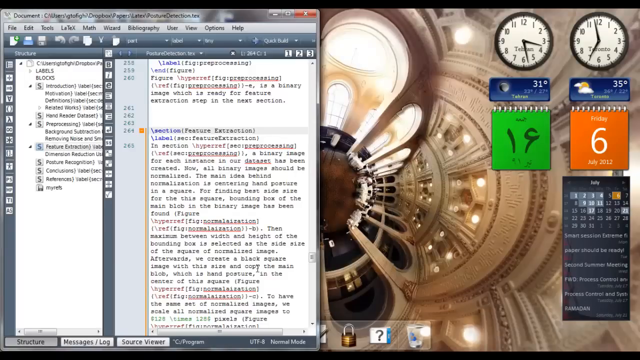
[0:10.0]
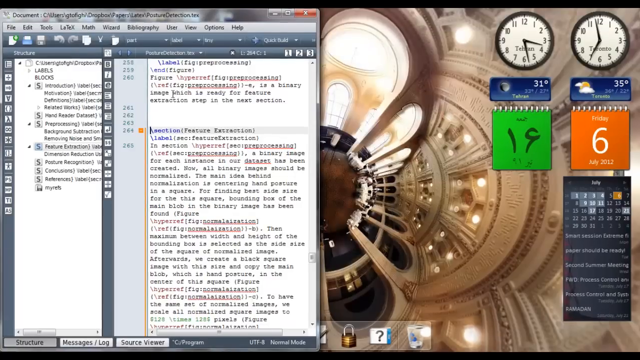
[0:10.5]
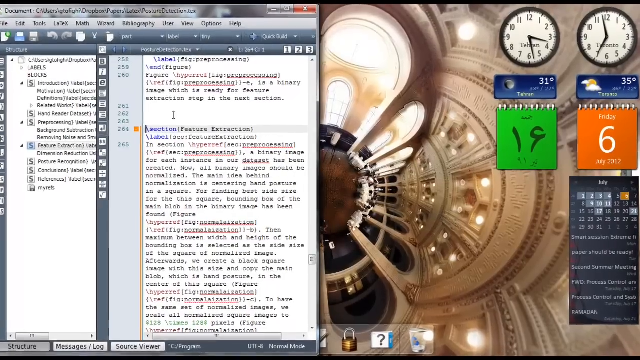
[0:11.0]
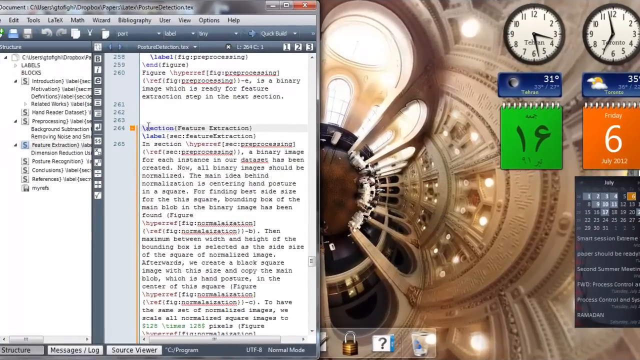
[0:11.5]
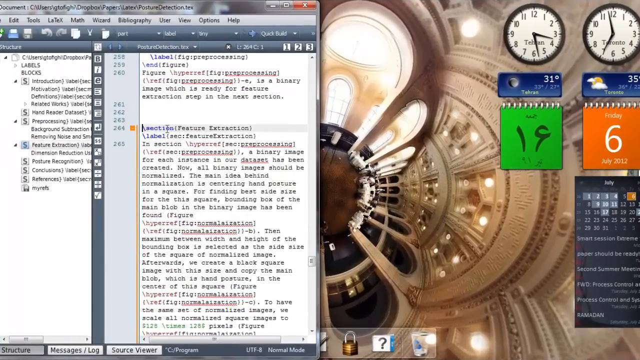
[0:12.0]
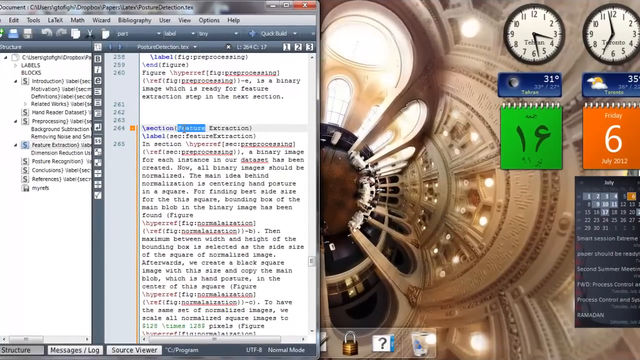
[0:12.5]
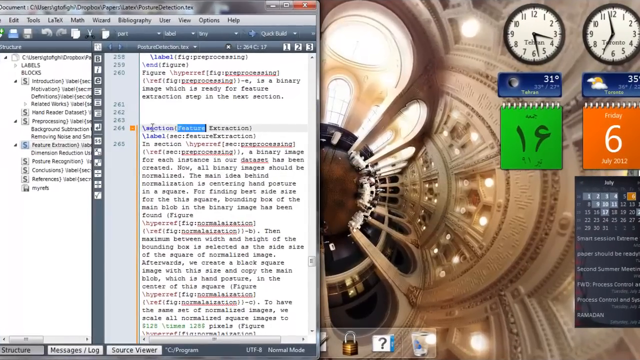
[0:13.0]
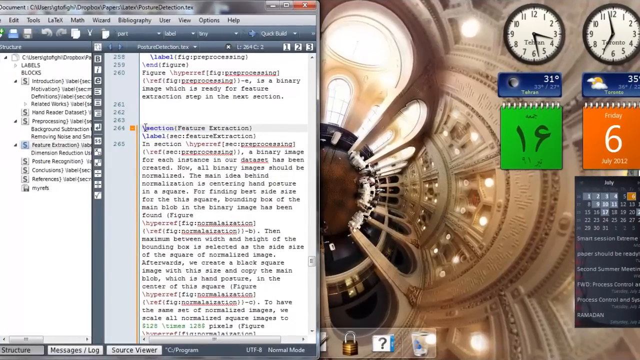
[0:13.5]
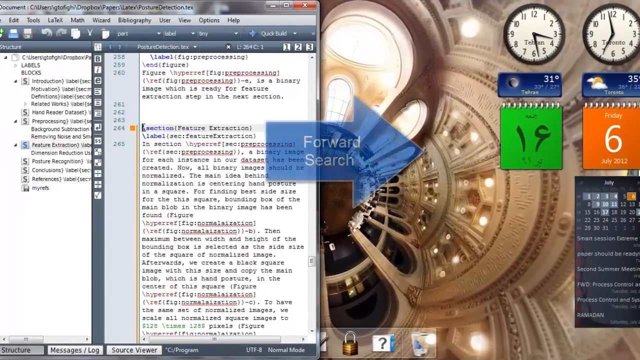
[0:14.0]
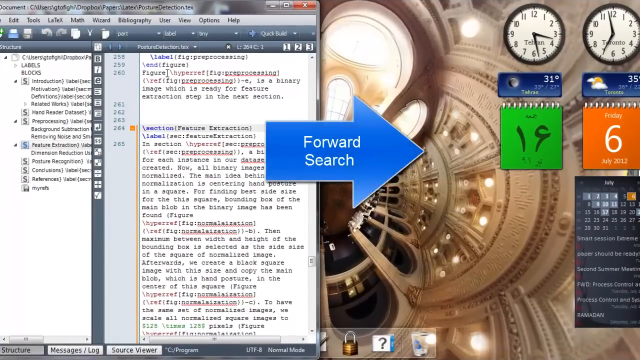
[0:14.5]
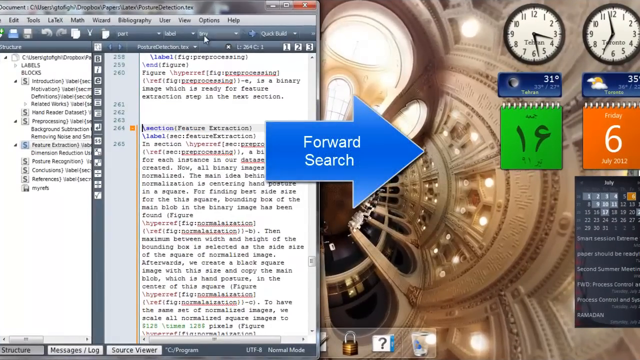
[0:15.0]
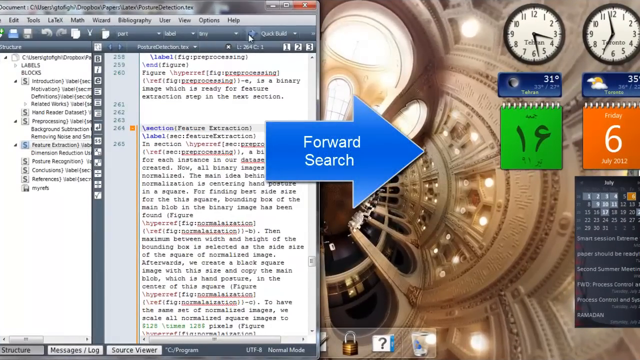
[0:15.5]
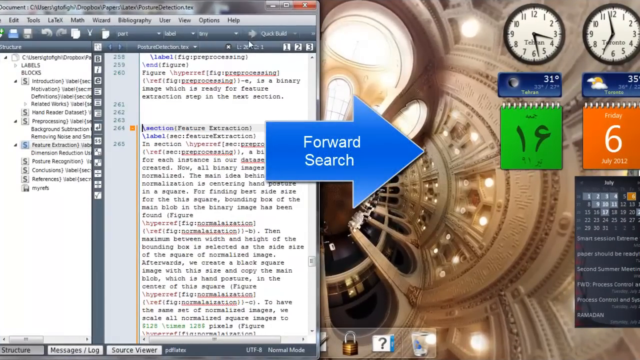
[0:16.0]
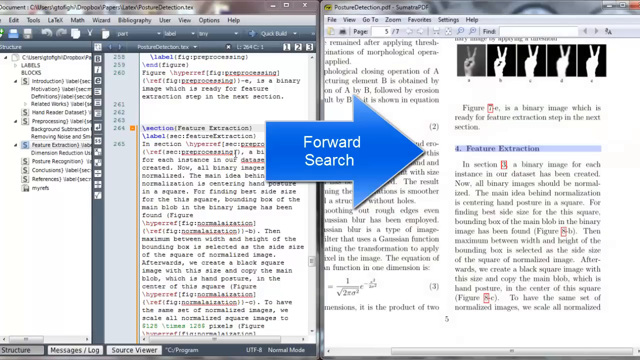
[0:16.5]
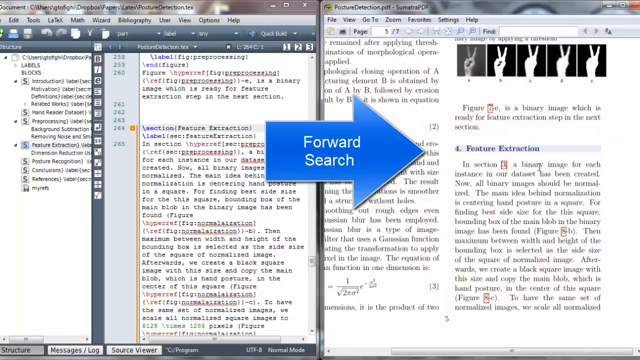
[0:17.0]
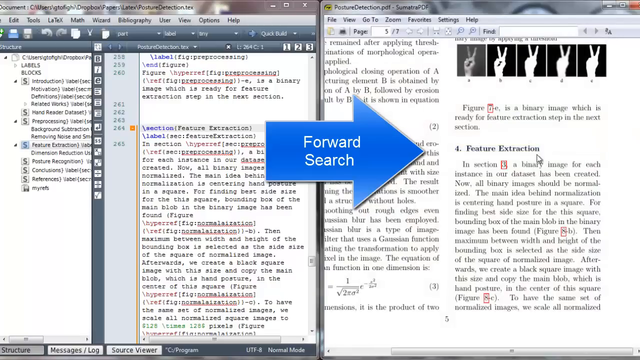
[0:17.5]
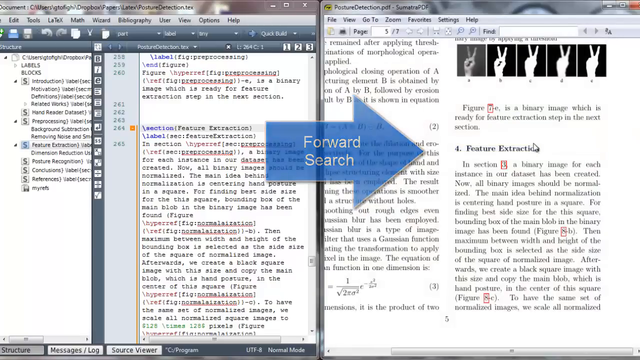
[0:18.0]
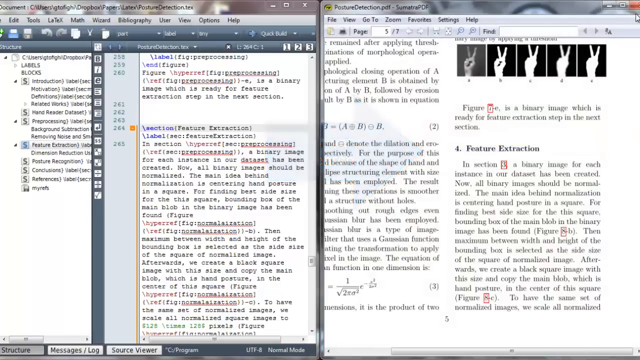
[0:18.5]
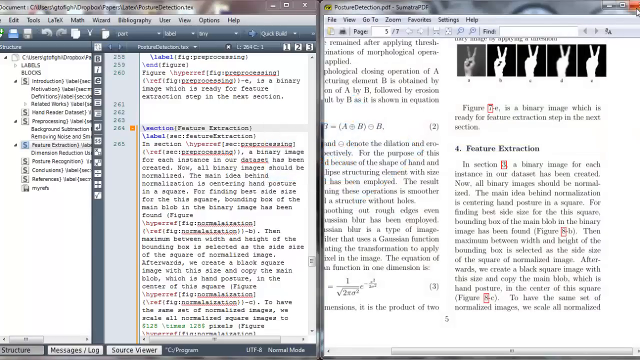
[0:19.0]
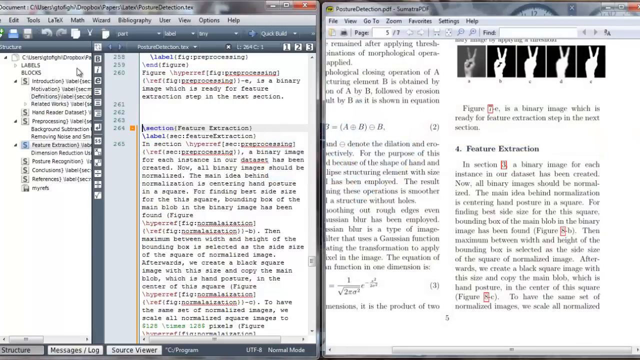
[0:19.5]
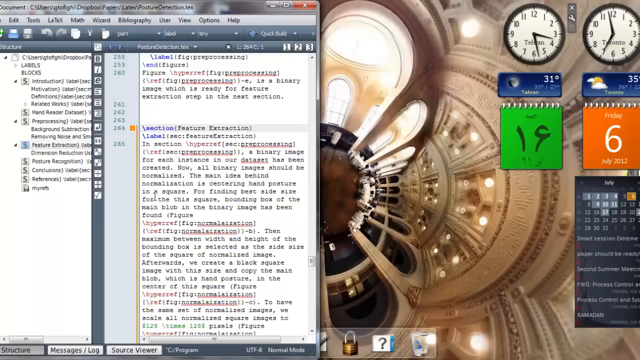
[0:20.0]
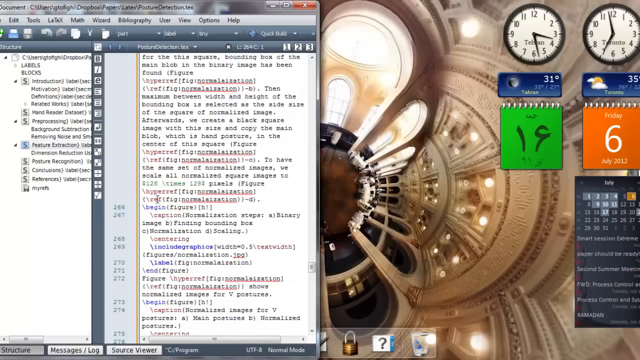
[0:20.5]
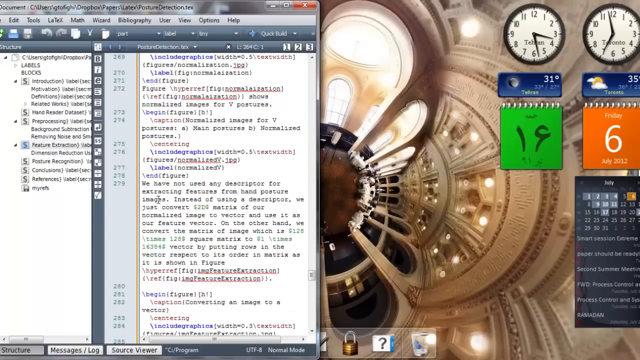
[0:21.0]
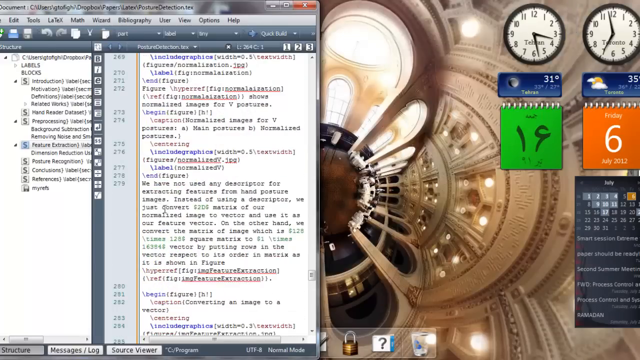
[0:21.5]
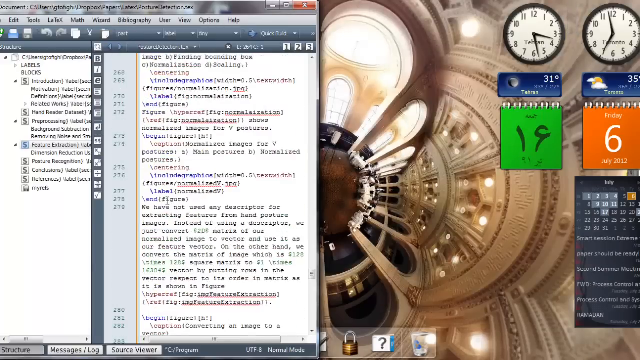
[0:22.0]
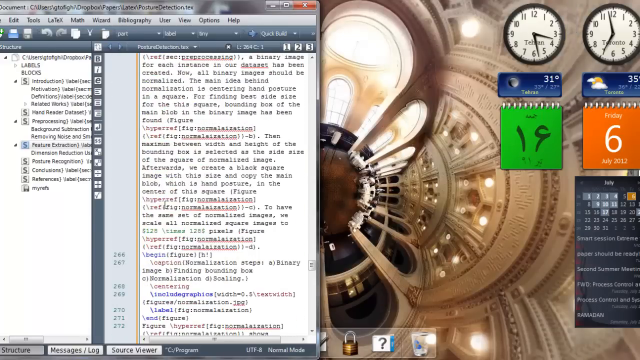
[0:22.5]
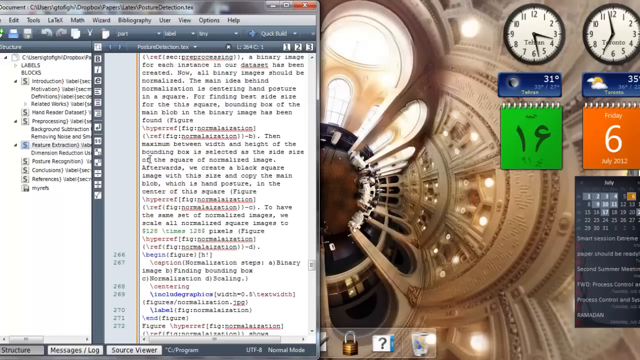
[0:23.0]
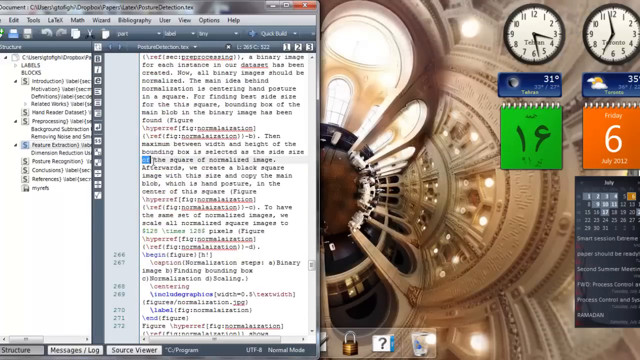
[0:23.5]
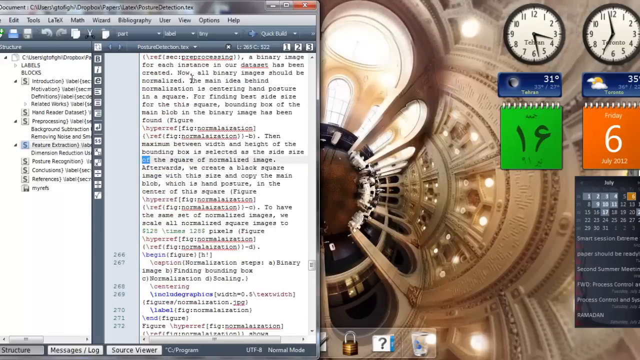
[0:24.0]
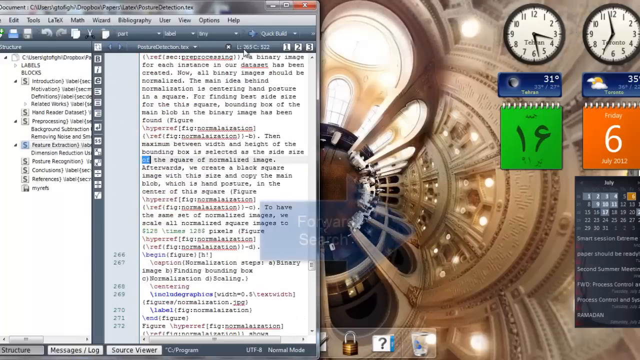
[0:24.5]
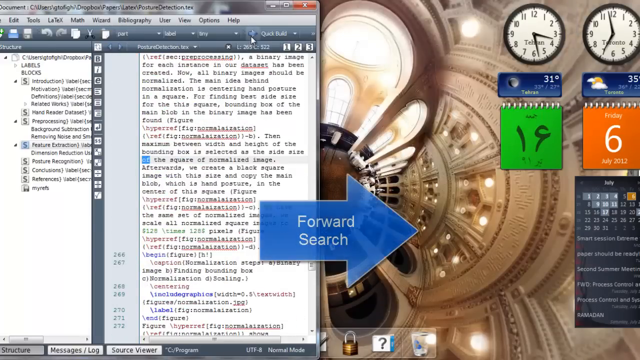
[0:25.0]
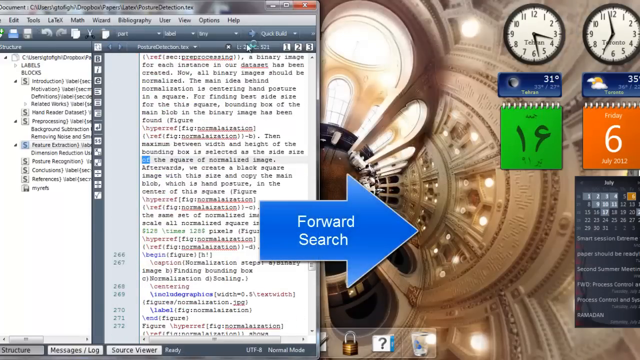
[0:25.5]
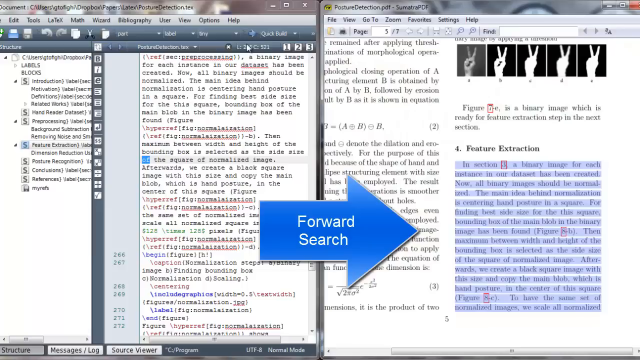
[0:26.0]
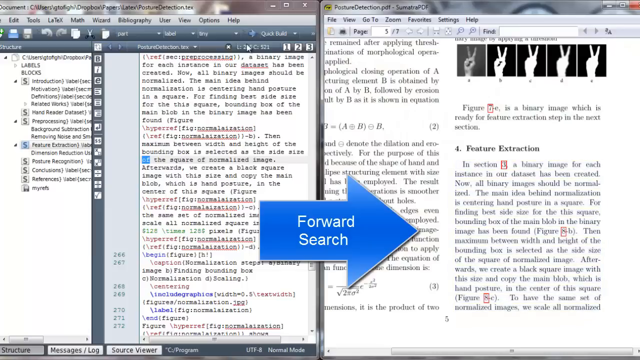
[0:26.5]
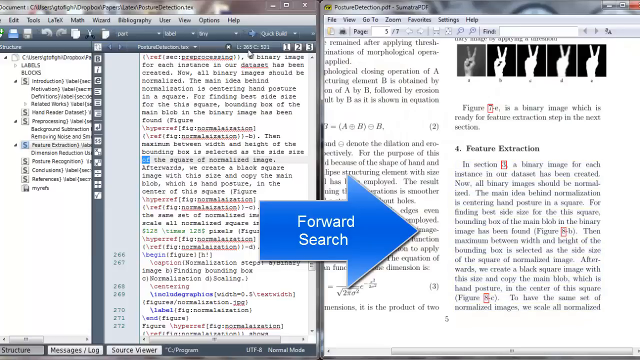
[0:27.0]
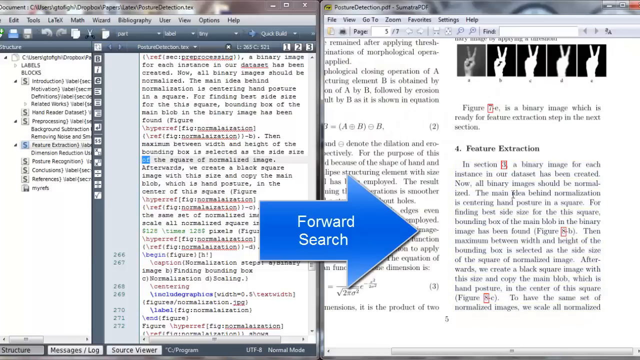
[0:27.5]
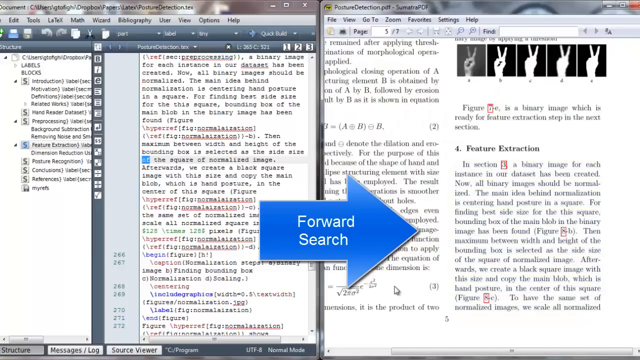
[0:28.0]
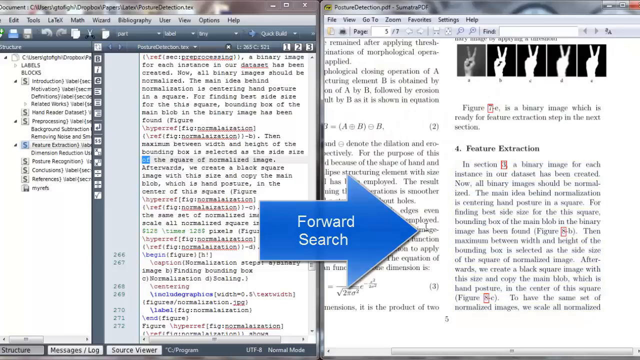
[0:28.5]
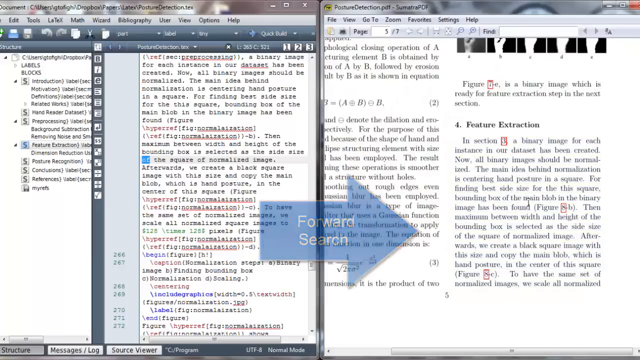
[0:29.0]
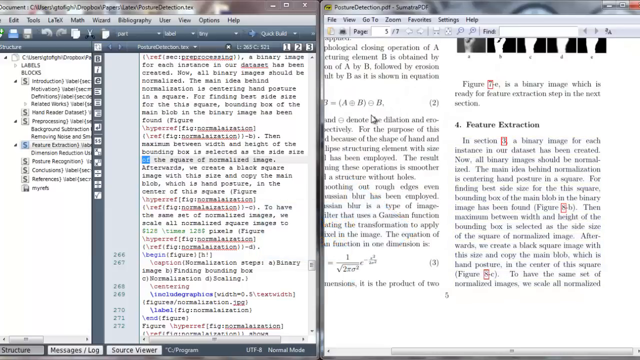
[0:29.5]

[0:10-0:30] He highlights a section of code, and on-screen editing effects show how things progress. He shows something in the code and then shows forward search searching a document or PDF for that specific thing. He appears to be showing different parts of the code and how they highlight certain parts of the PDF. Some of the code looks like functions written out with what they do underneath them.